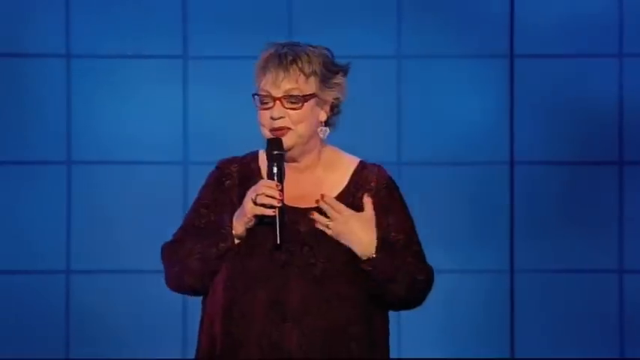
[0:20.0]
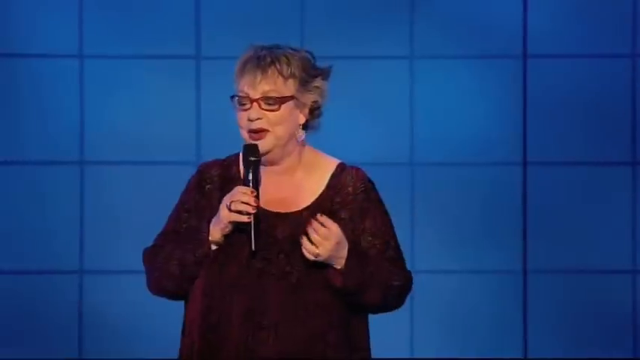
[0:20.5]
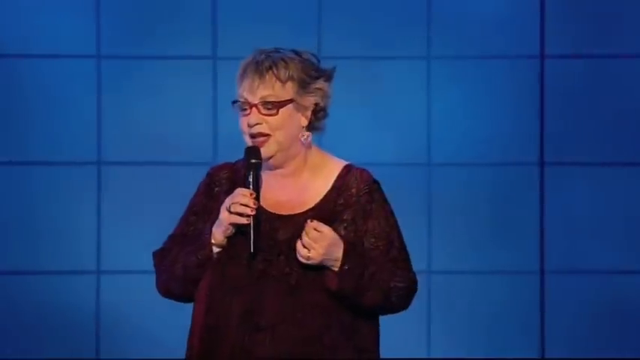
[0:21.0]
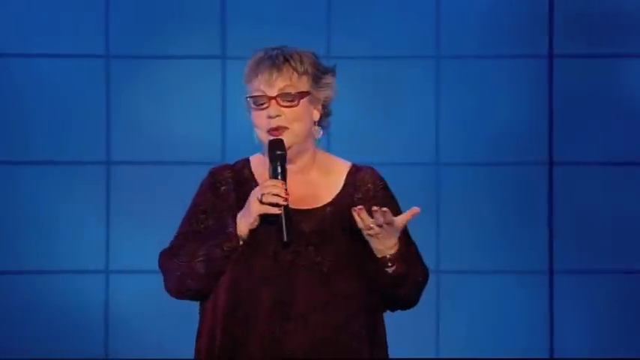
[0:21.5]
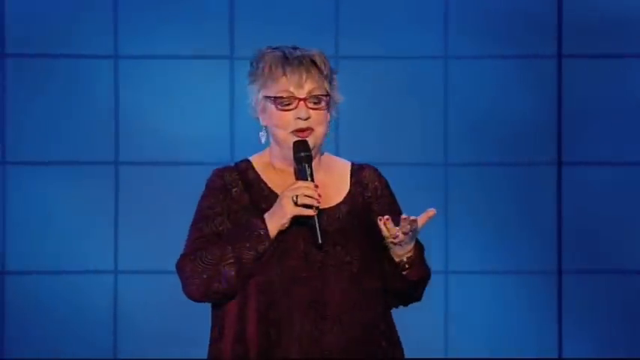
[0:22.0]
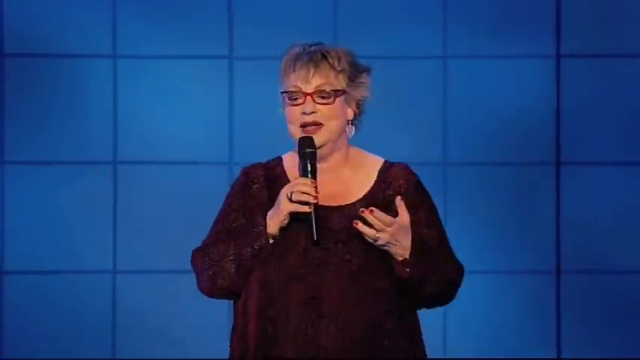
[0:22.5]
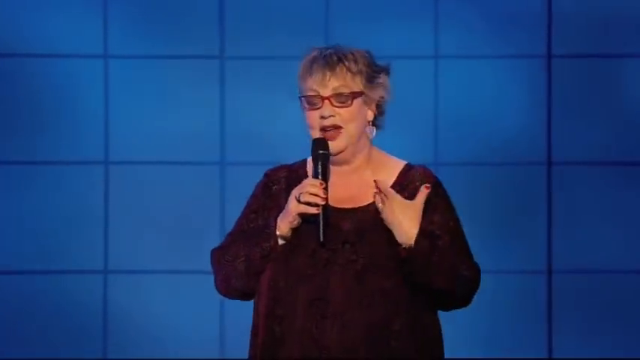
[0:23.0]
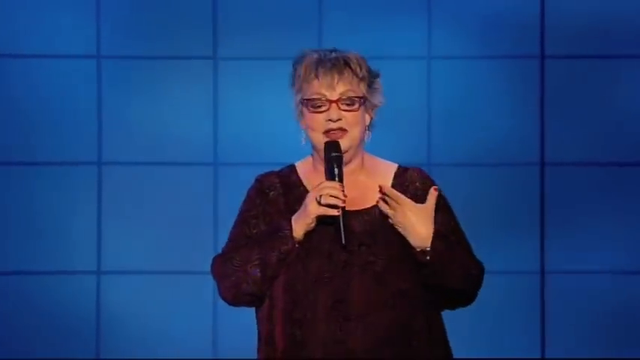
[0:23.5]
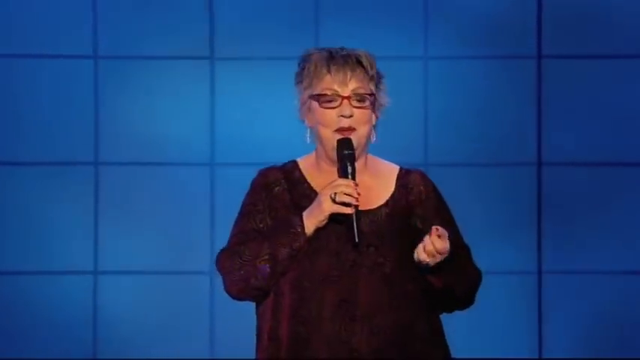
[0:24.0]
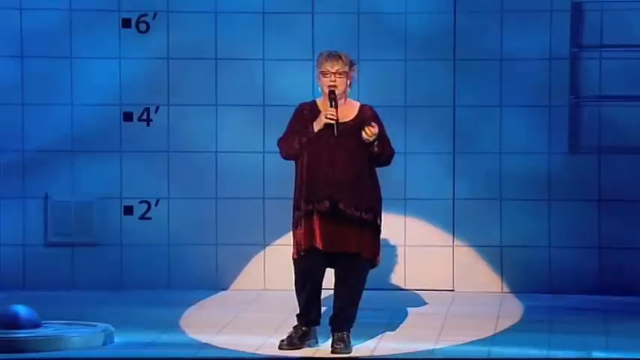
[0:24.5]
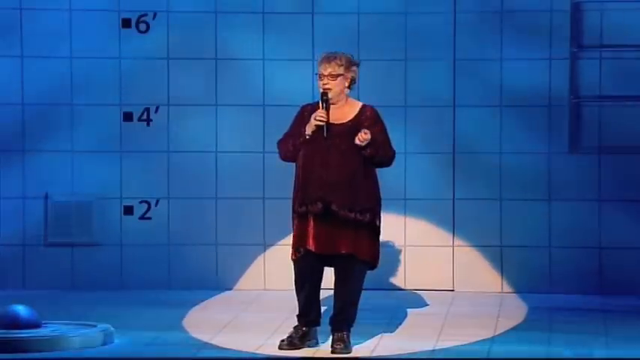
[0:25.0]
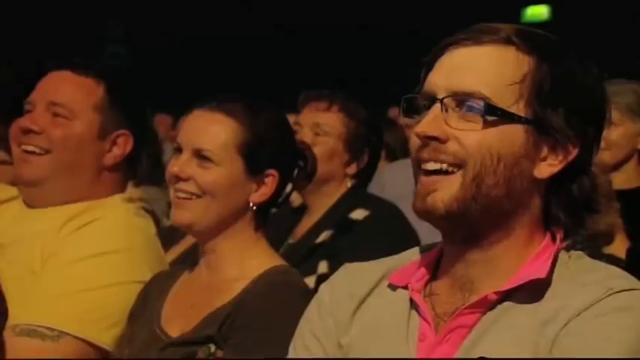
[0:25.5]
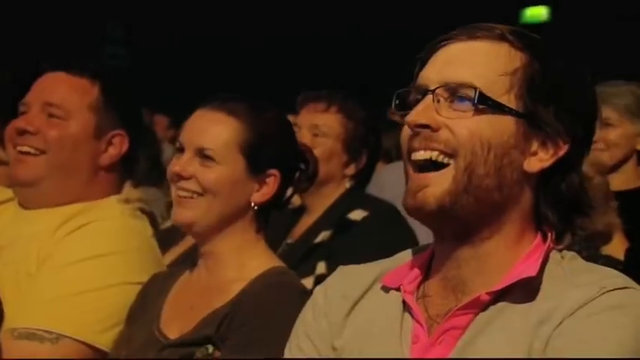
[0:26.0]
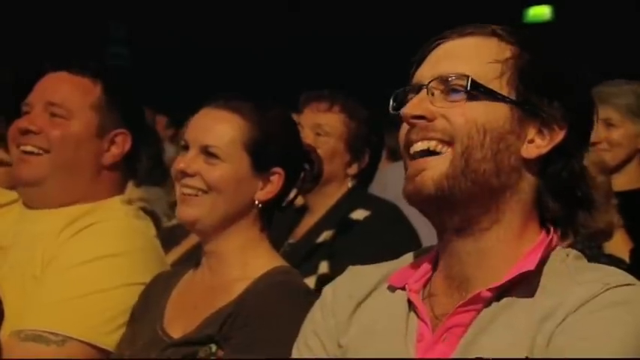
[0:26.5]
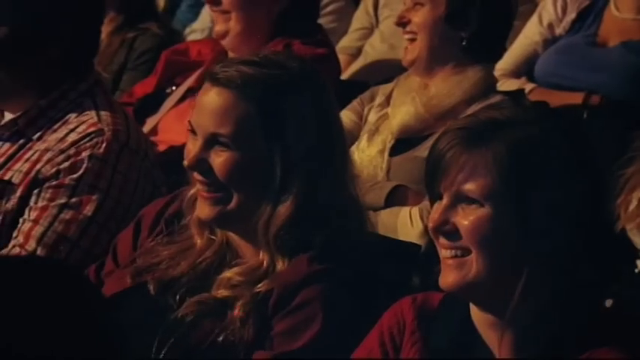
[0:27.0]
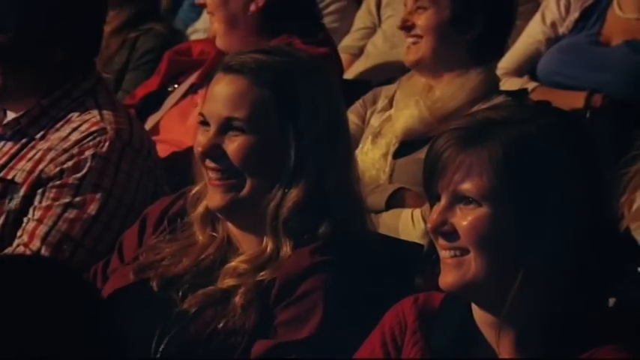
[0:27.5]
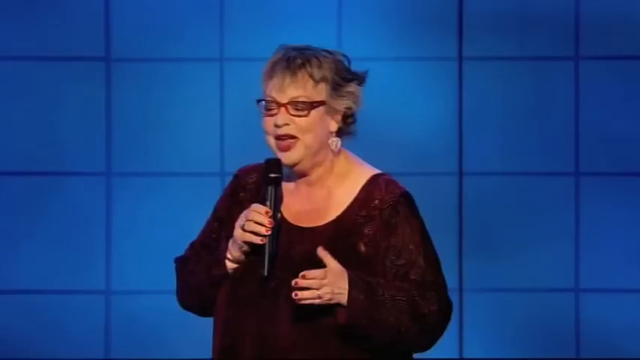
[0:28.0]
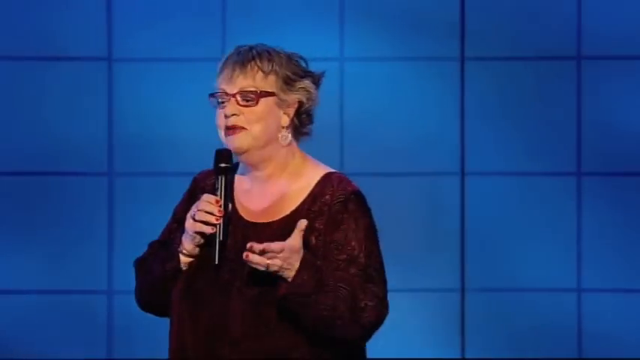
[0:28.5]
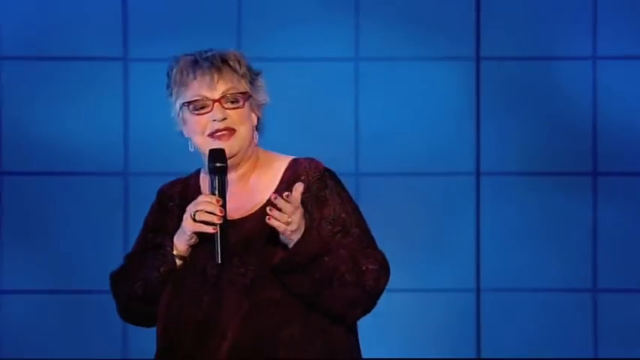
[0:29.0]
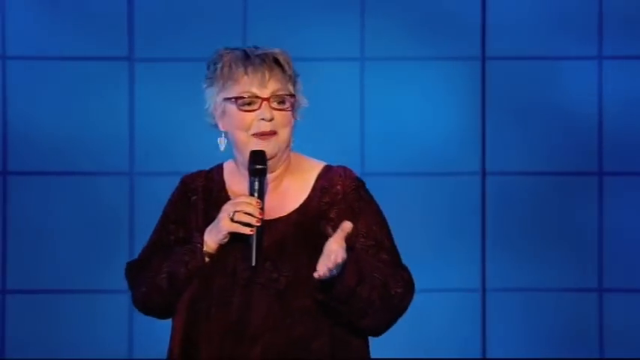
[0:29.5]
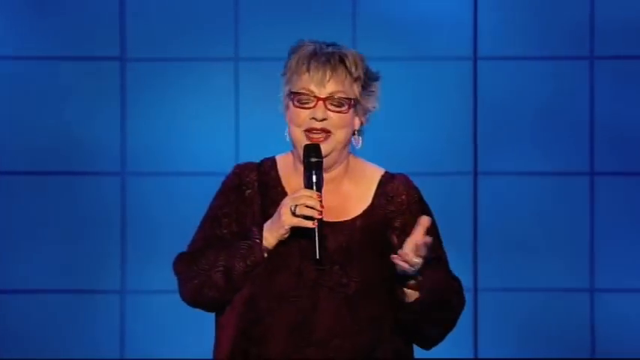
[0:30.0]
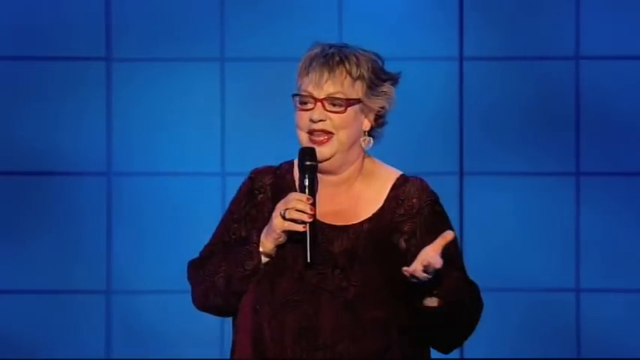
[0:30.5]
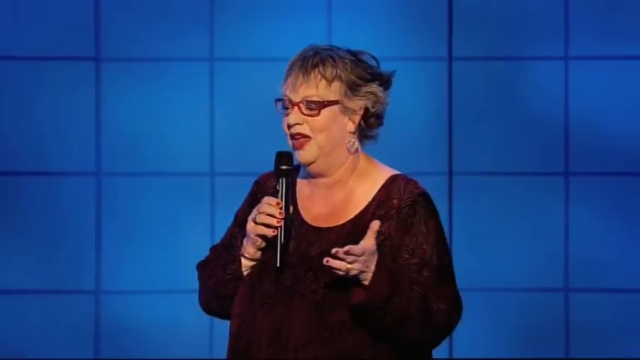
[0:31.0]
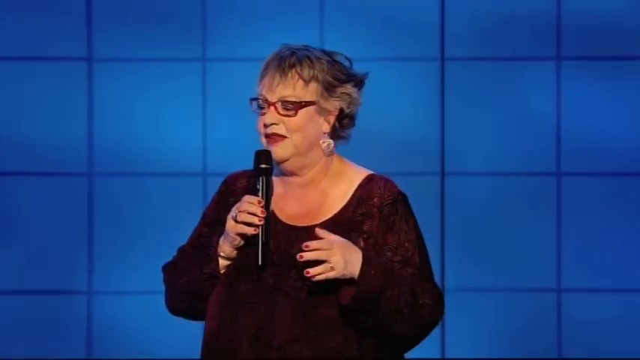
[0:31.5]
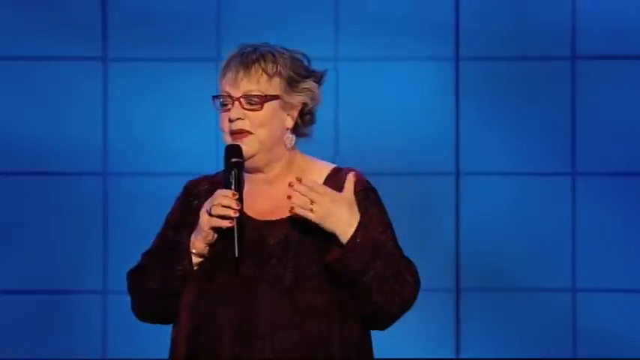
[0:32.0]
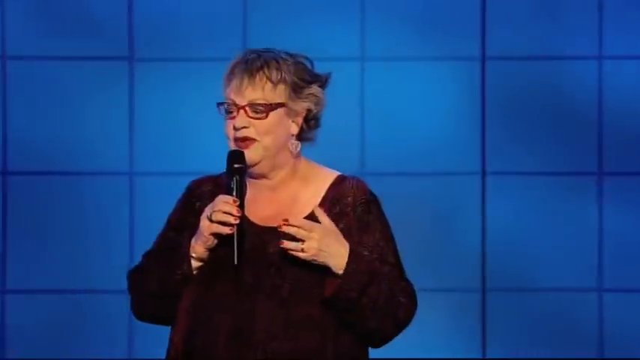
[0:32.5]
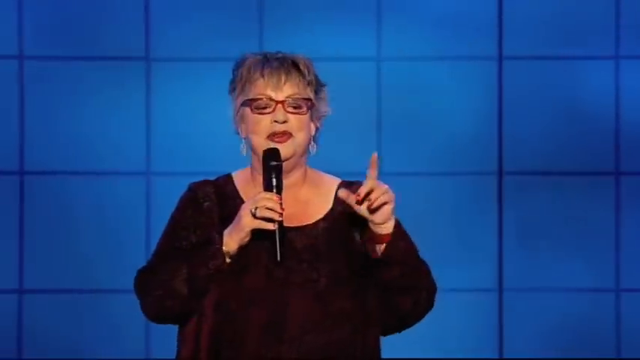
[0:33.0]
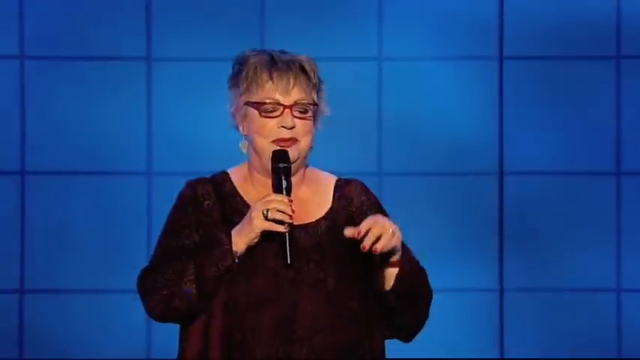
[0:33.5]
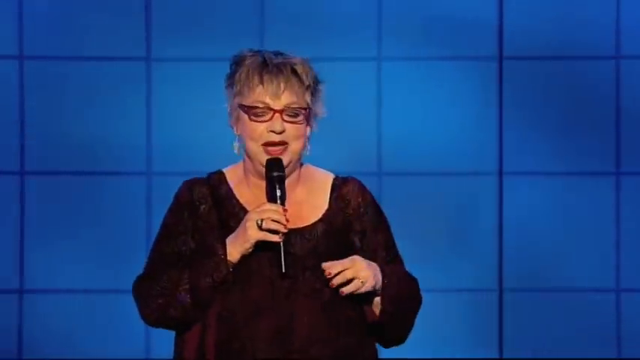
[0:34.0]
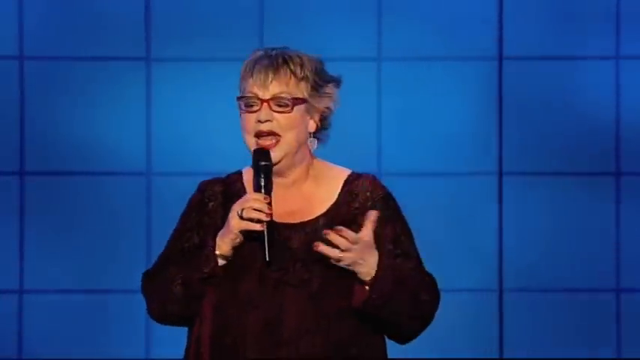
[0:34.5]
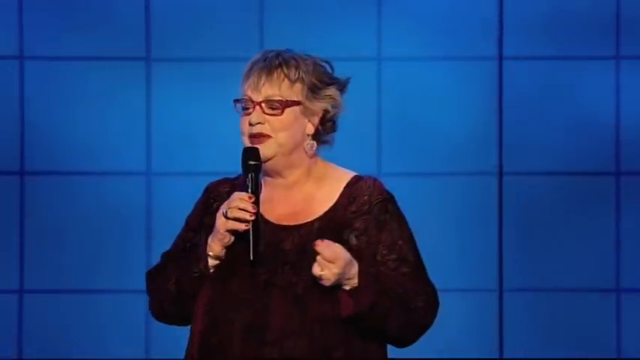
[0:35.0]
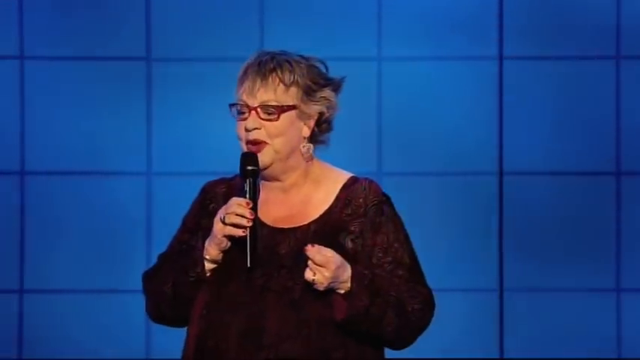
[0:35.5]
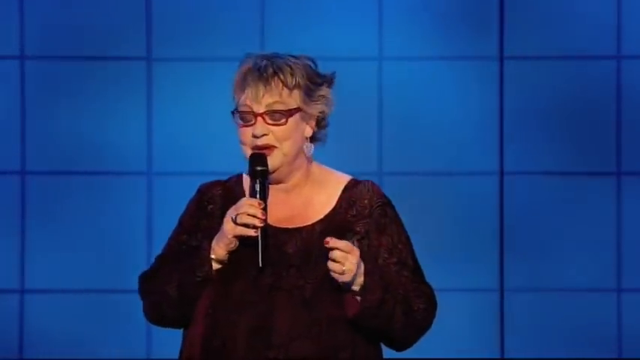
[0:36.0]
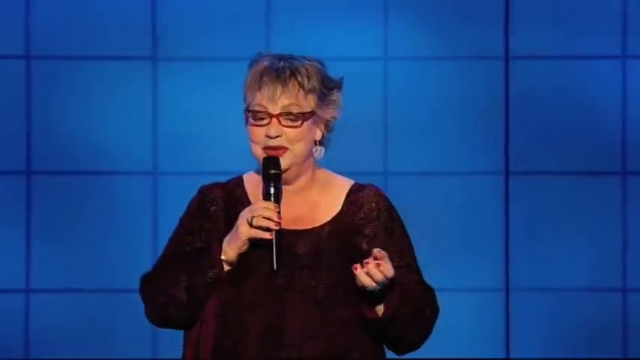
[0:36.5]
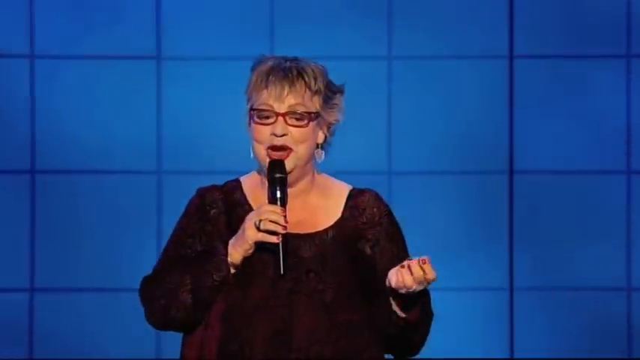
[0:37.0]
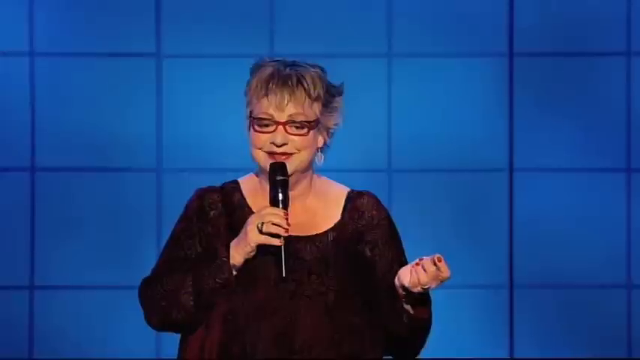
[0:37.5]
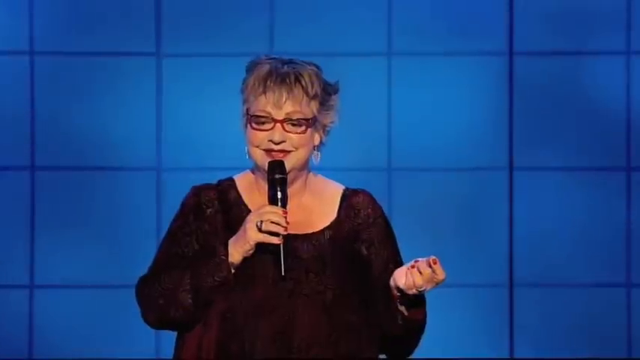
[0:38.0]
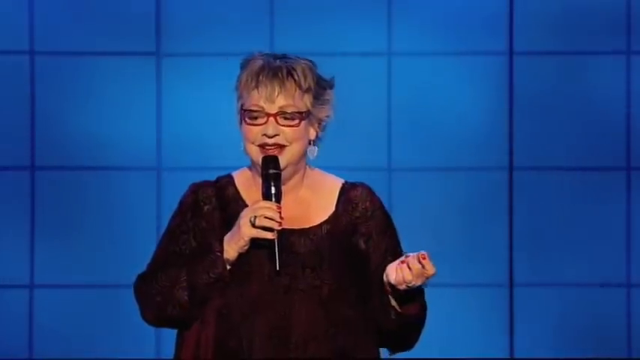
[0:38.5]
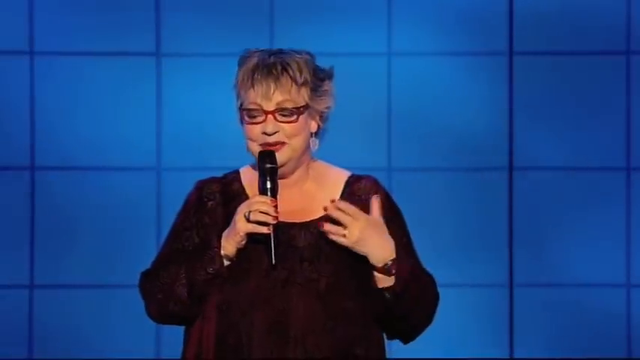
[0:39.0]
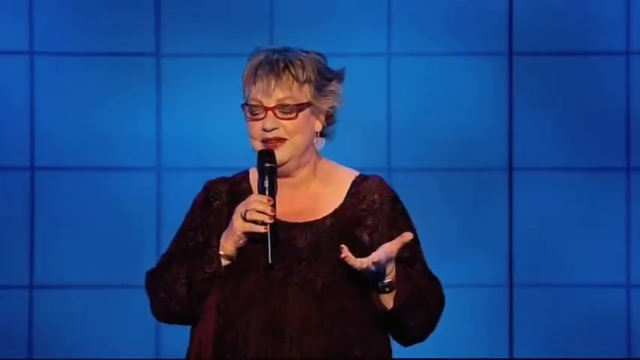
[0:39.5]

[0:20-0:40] A woman in a purple dress wears rings on the ring fingers of both her left and right hands, glasses with a thick red frame, hoop earrings and red lipstick. Her grey hair has some brunette in it. Behind her is a blue stage made of blue cubes with dark blue lining between them. Also behind her are the numbers 2, 4 and 6, going up, written in bold black. Each number has a block in front of it that looks like a bullet point and an apostrophe after it. To her left is a picture that looks like a ladder. She is making the audience laugh, and multiple audience members are visible.